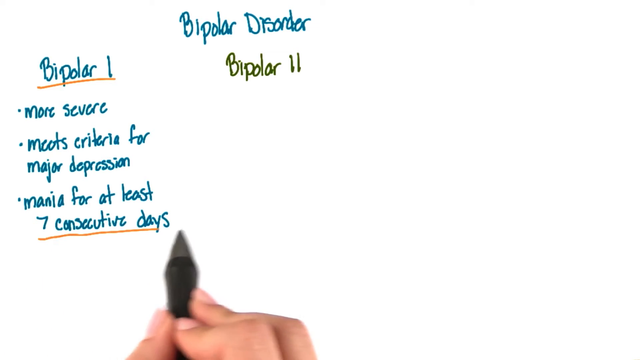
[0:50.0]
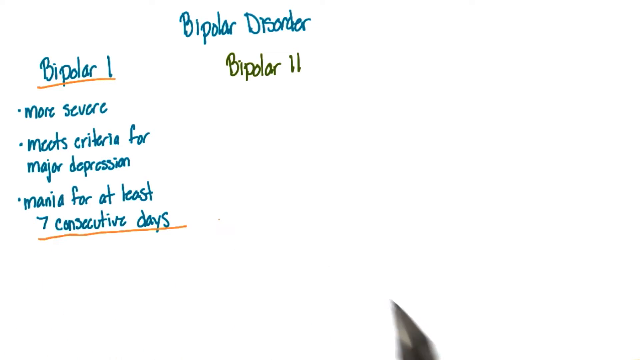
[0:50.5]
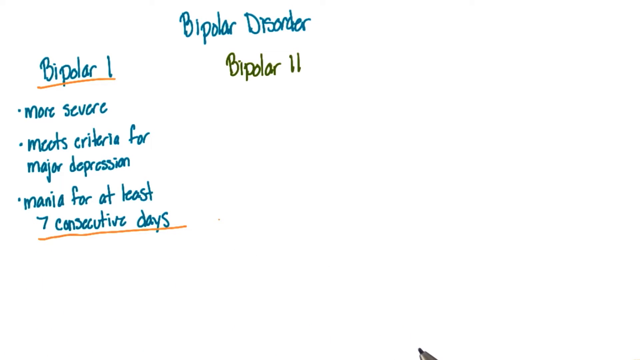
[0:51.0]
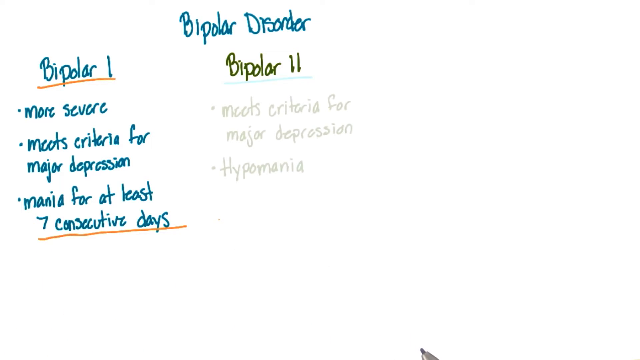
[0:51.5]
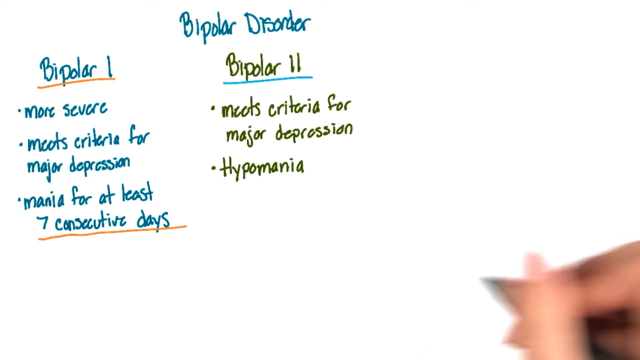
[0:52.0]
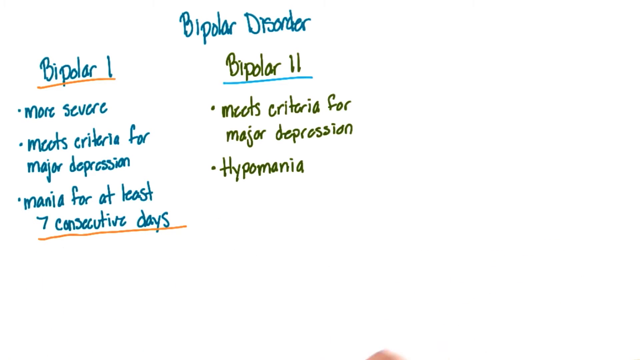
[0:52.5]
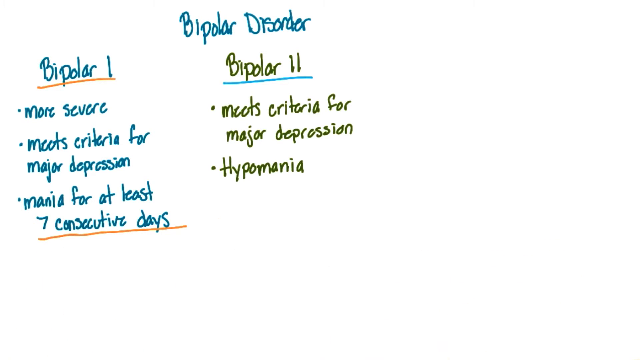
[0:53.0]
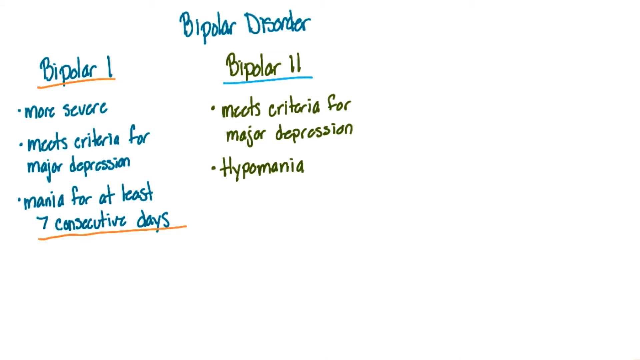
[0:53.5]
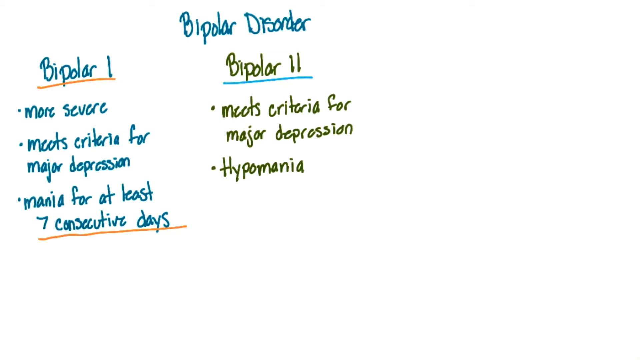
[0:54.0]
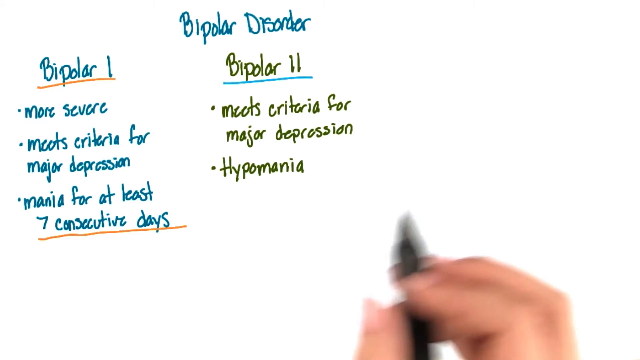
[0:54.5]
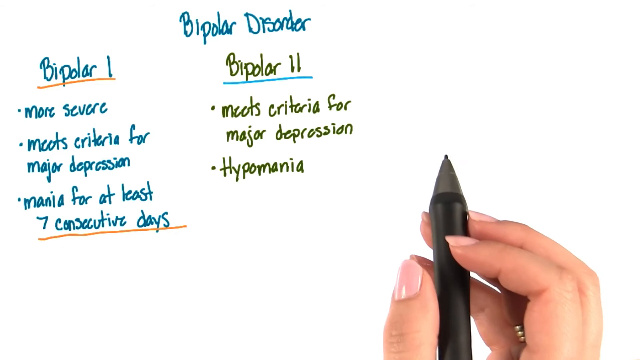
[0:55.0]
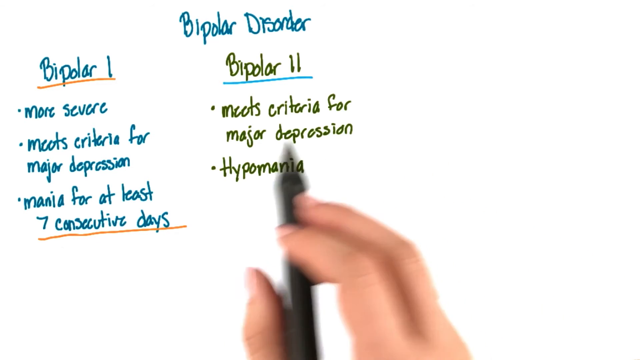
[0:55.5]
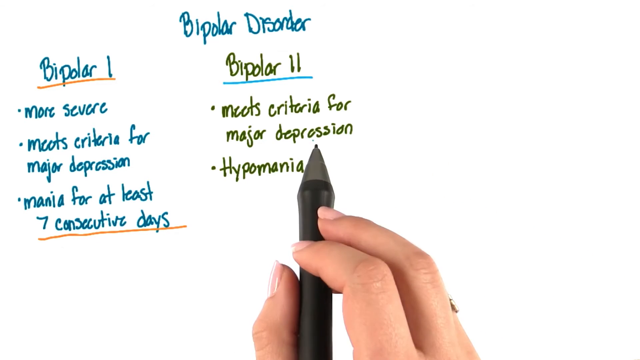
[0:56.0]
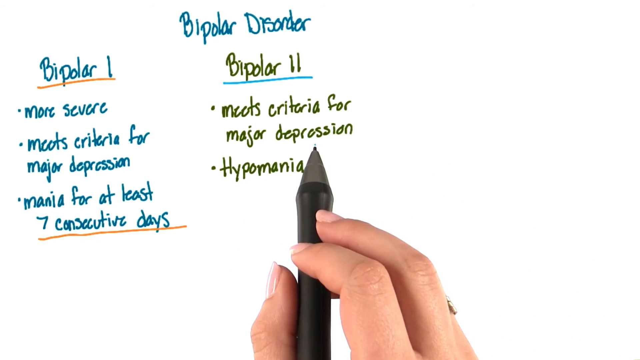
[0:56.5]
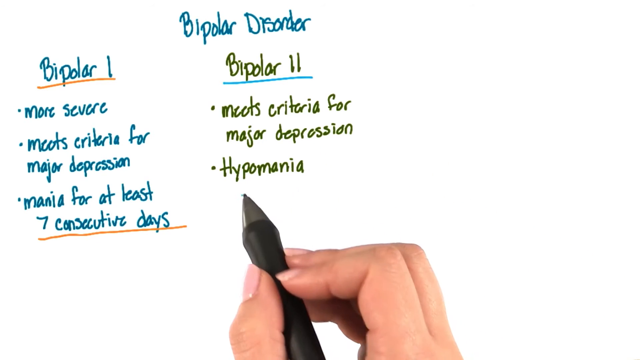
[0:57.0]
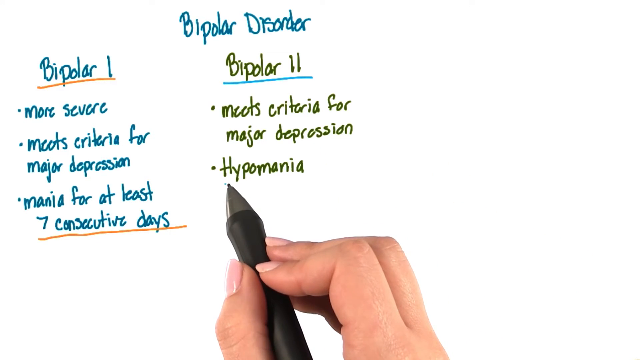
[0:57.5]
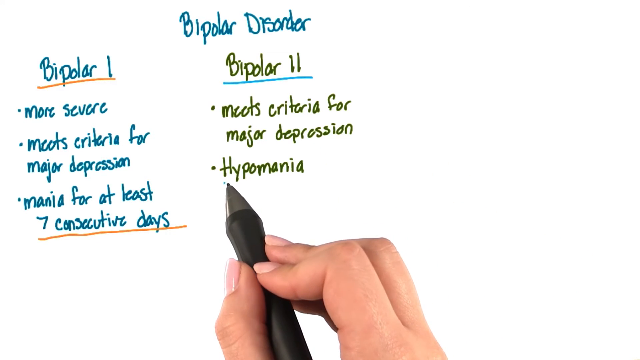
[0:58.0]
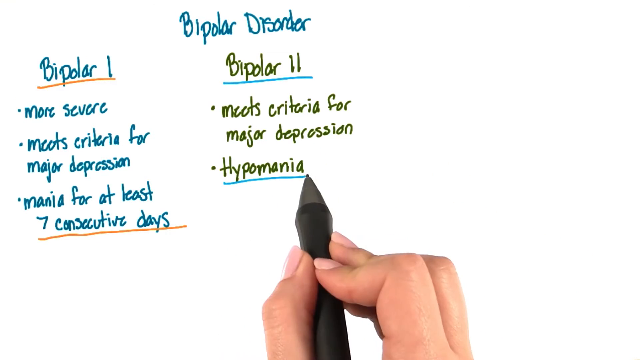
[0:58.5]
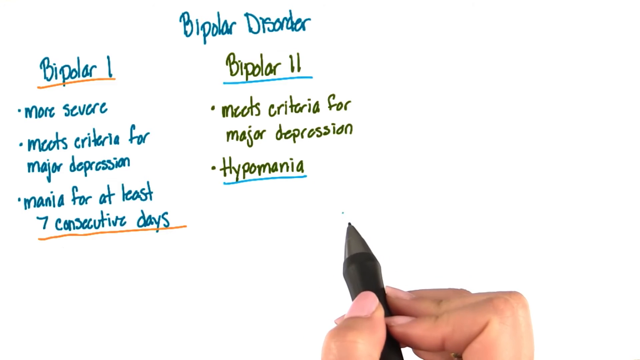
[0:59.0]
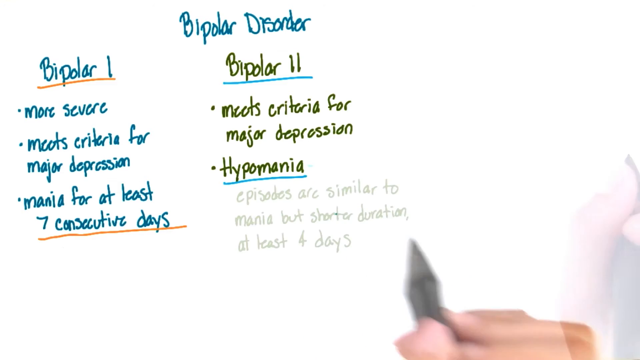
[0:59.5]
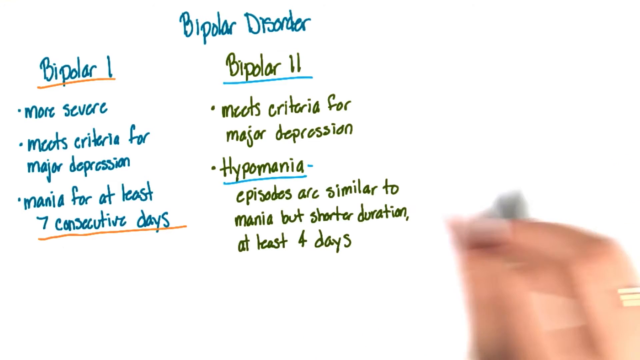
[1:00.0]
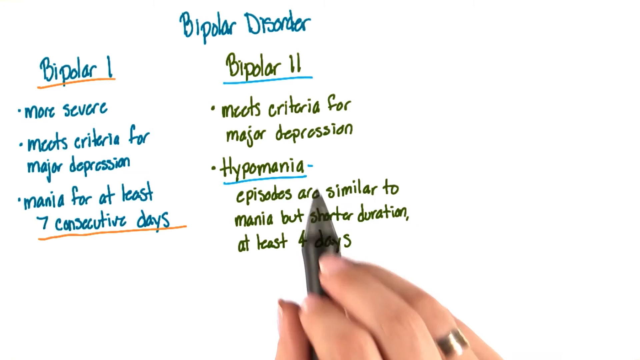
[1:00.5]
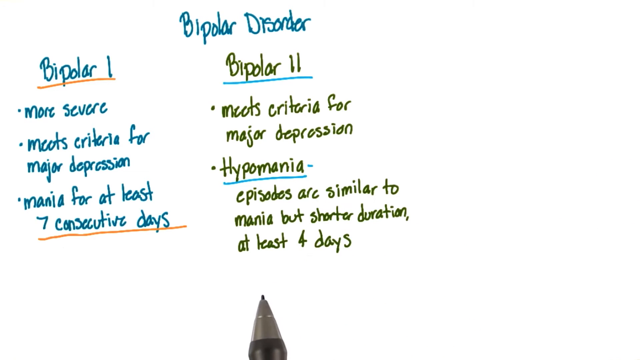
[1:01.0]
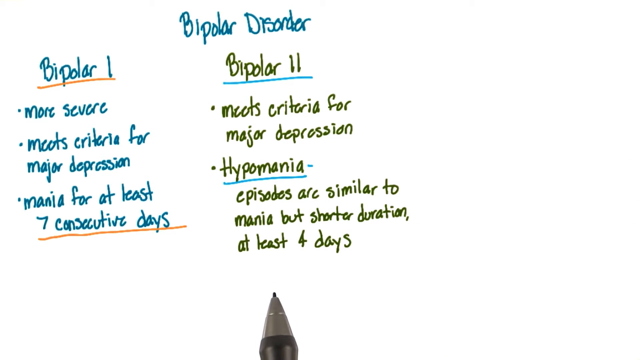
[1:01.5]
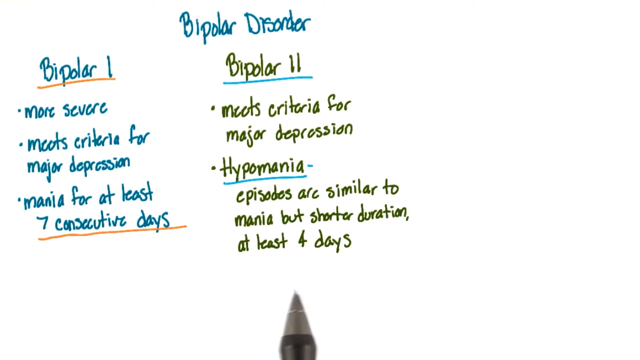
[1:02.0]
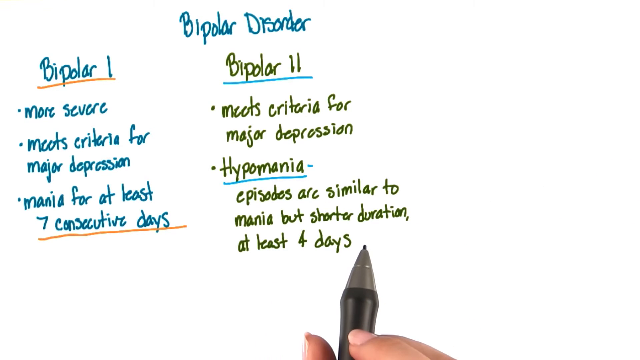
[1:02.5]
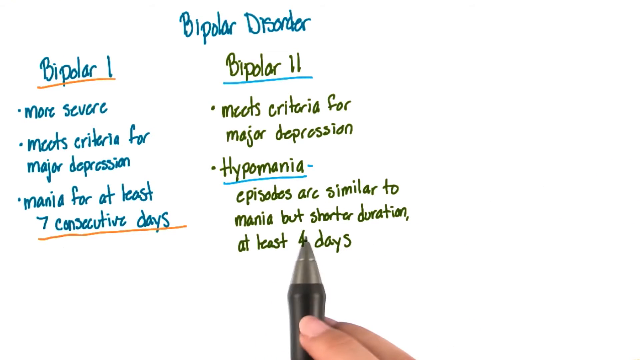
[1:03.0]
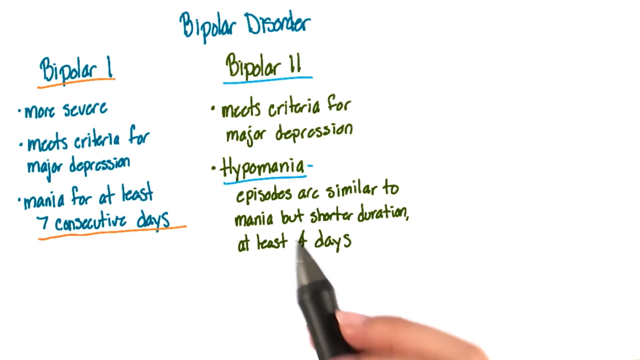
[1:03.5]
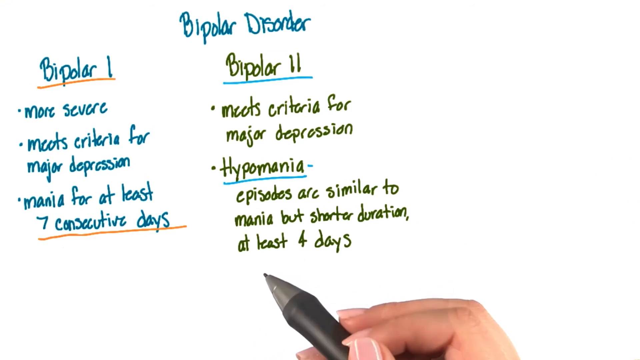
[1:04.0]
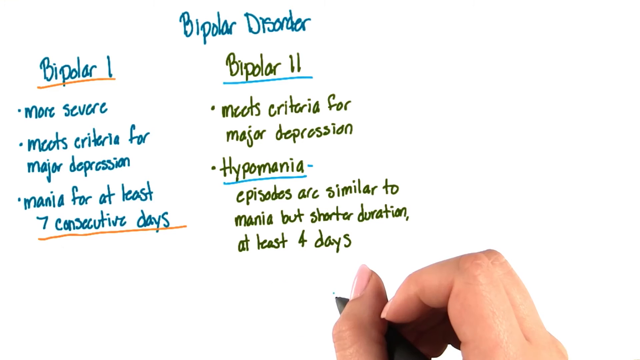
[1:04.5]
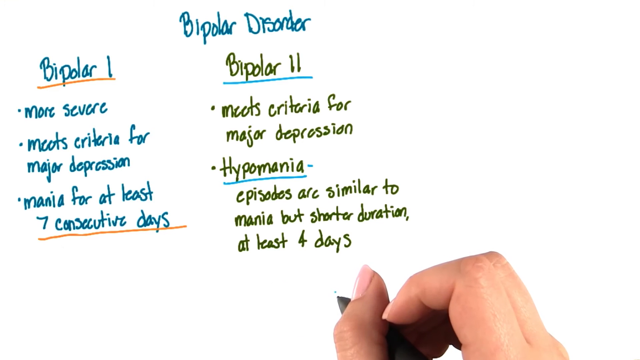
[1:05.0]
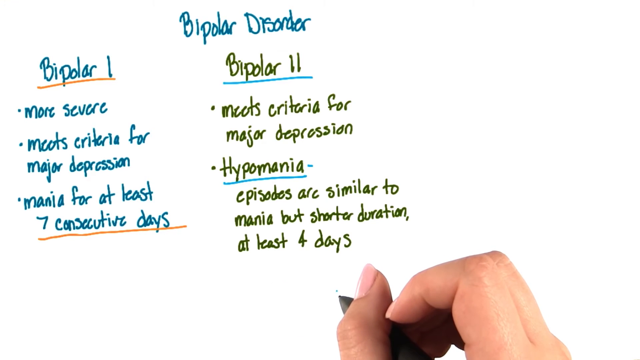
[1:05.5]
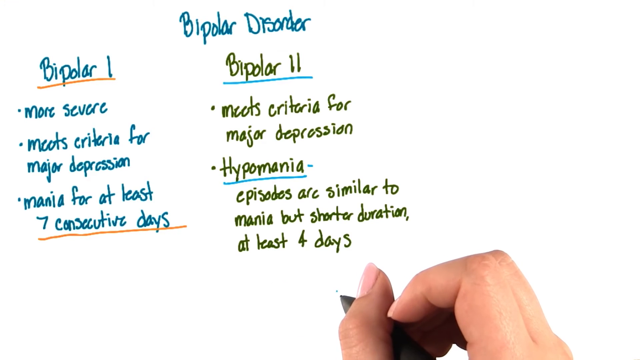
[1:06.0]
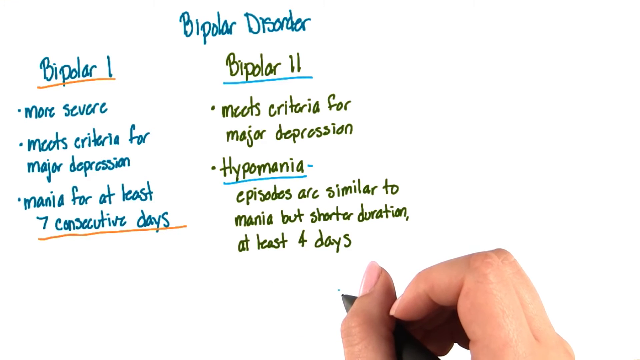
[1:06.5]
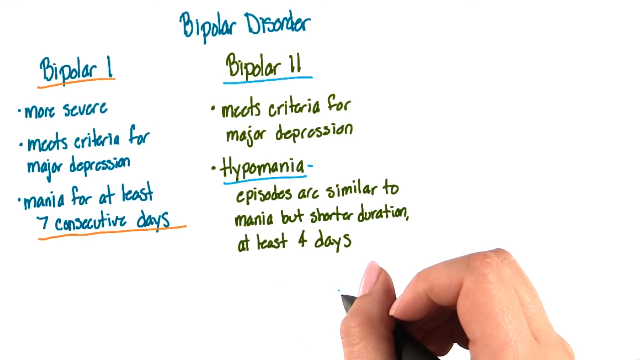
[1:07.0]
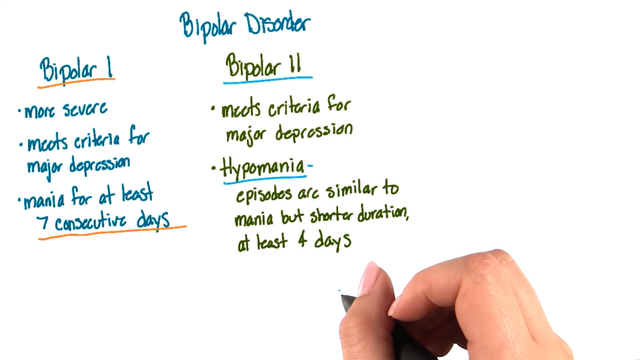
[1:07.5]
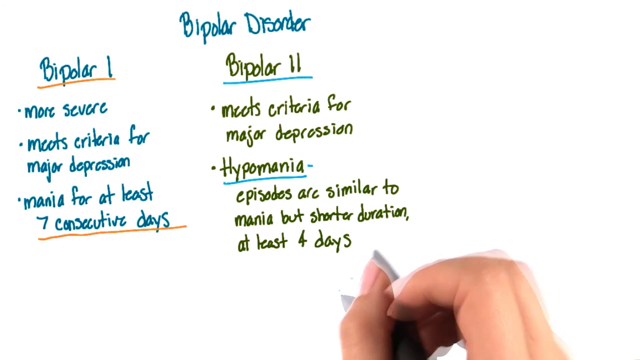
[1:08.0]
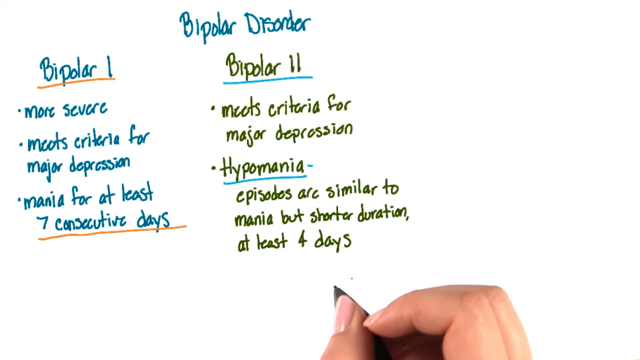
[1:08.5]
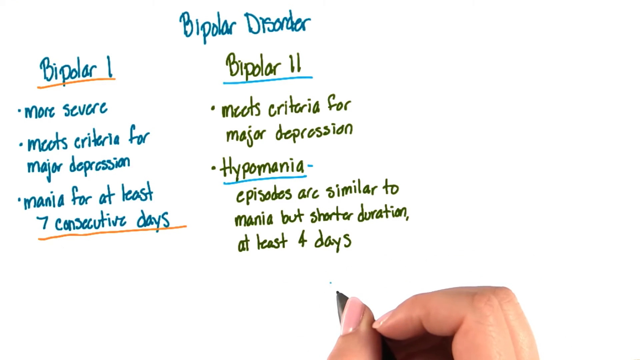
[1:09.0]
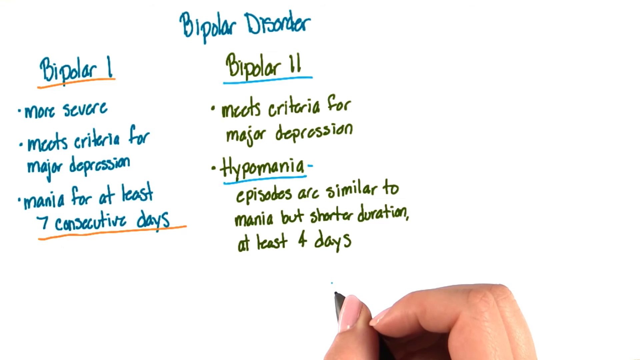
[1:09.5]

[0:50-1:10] Someone writes on a solid white background with an ink pen, gripping it with the thumb, middle and index fingers of the right hand. The text so far reads "Bipolar Disorder. Bipolar 1. More severe. Meets criteria for major depression. Mania for at least 7 consecutive days. Bipolar 2. Meets criteria for major depression. Hypomania." The hand and pen appear for a few seconds in the bottom left corner, pull out of frame, and then reappear. The pen points toward the words "major depression" under "Bipolar 2" and then underlines the word "hypomania" under "Bipolar 2". New text appears that reads "Episodes are similar to mania but shorter duration at least 4 days."